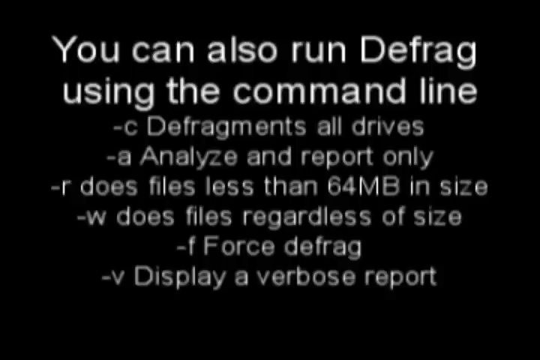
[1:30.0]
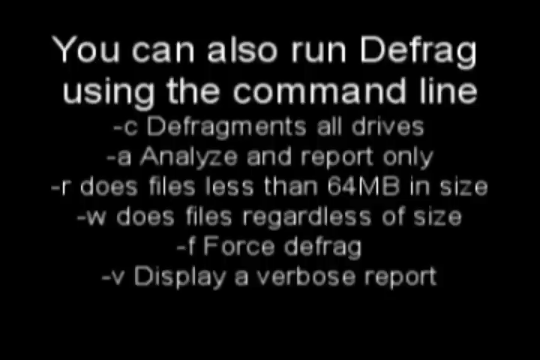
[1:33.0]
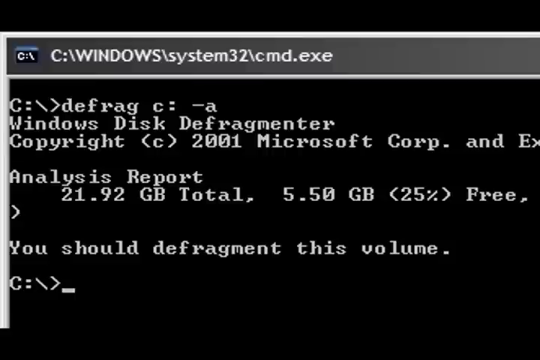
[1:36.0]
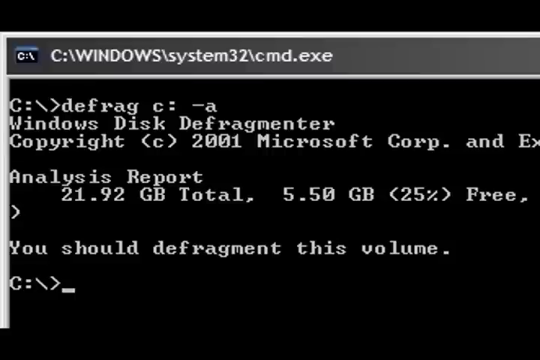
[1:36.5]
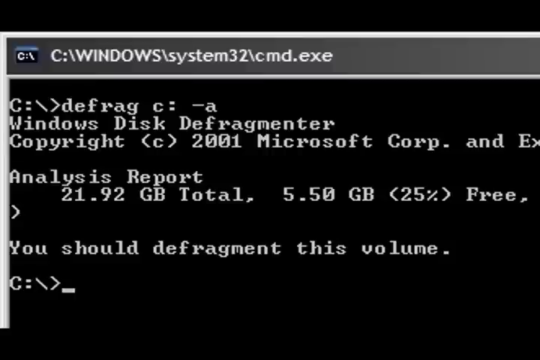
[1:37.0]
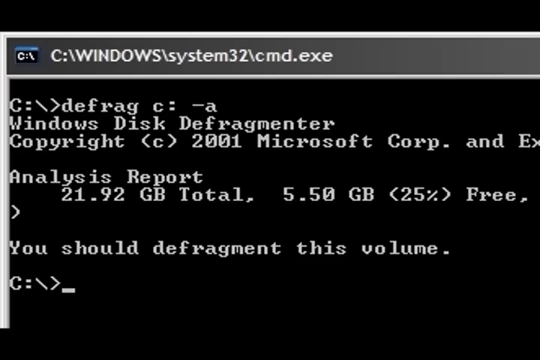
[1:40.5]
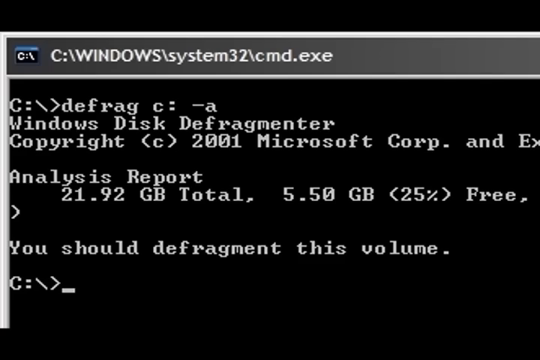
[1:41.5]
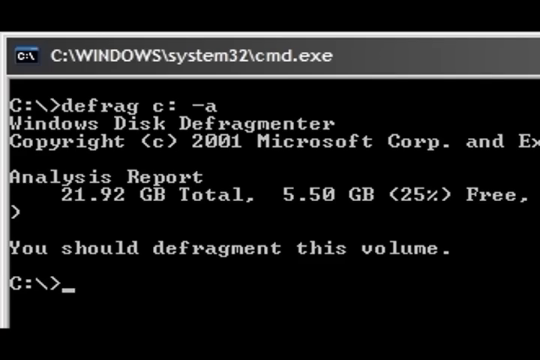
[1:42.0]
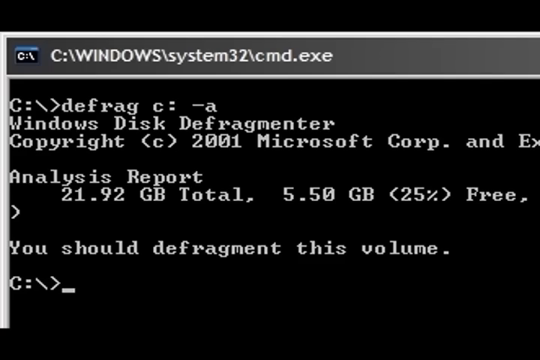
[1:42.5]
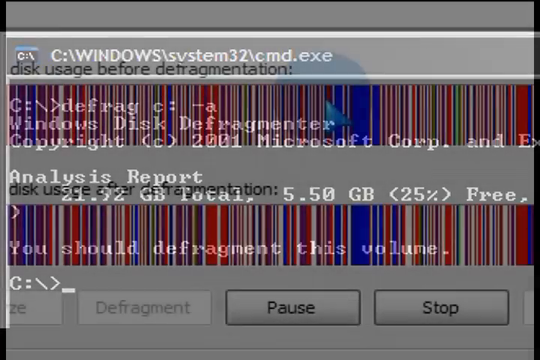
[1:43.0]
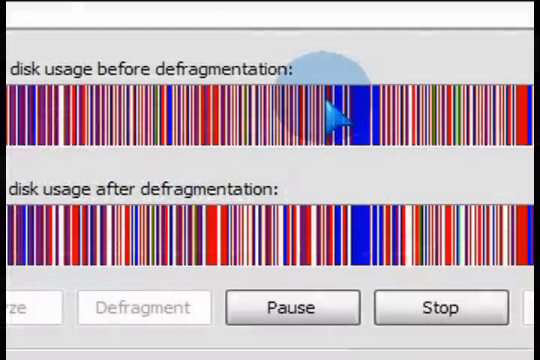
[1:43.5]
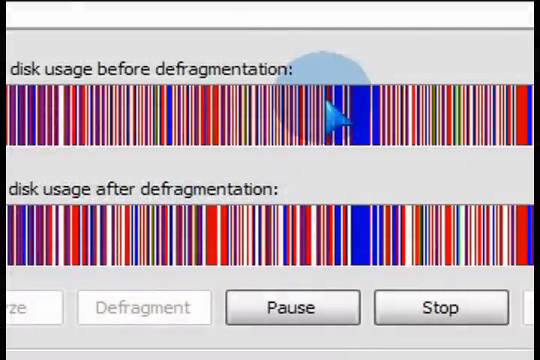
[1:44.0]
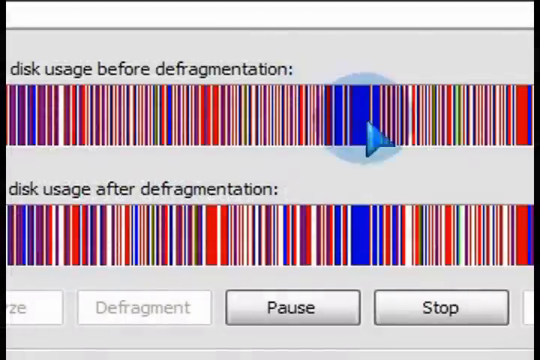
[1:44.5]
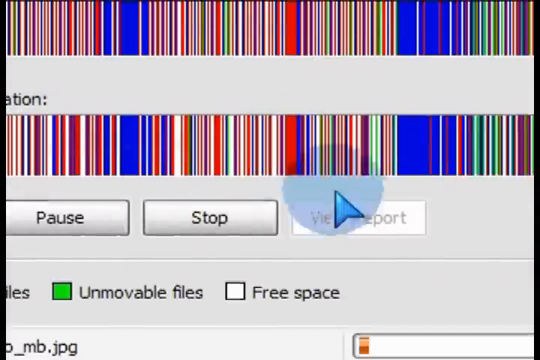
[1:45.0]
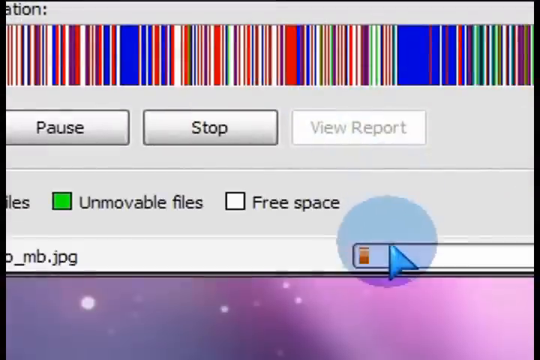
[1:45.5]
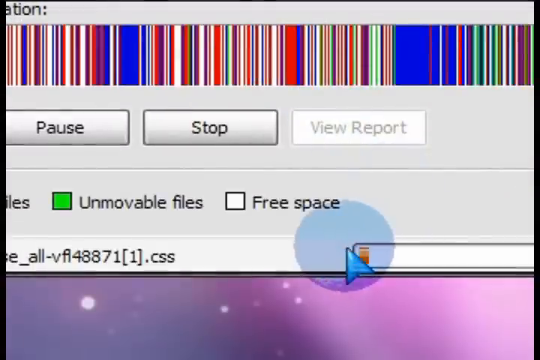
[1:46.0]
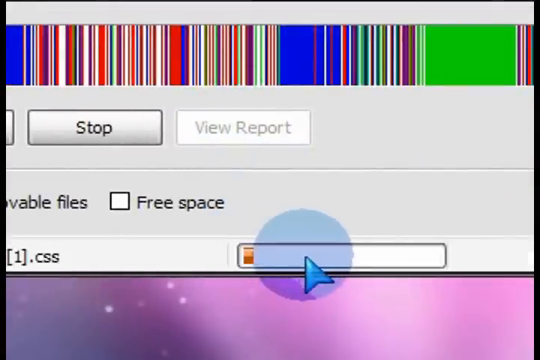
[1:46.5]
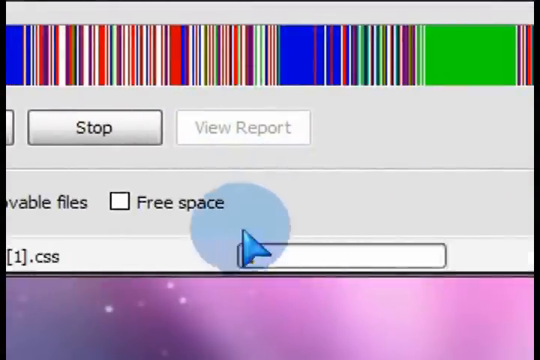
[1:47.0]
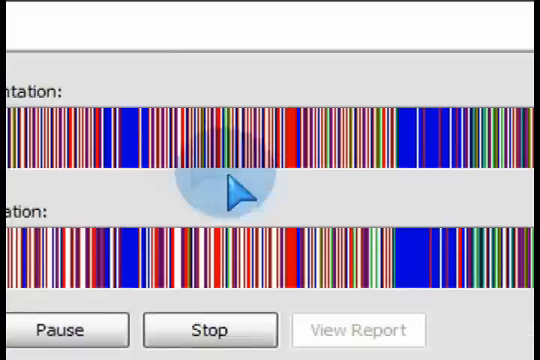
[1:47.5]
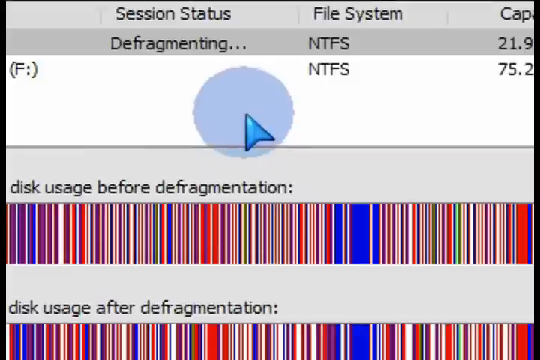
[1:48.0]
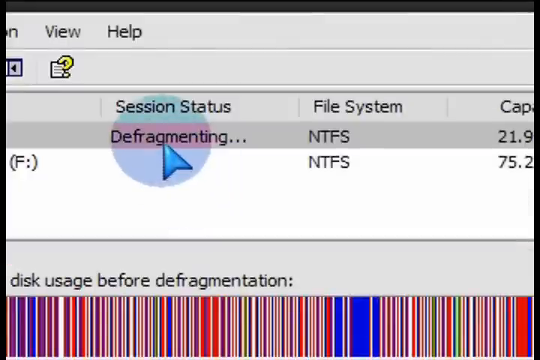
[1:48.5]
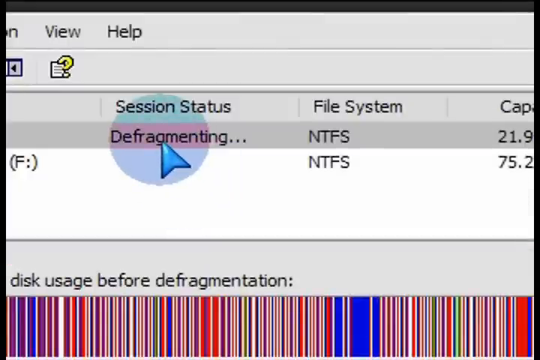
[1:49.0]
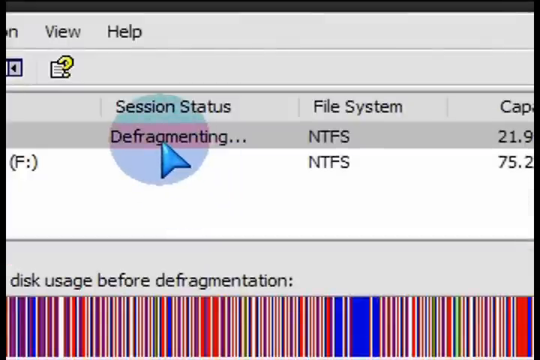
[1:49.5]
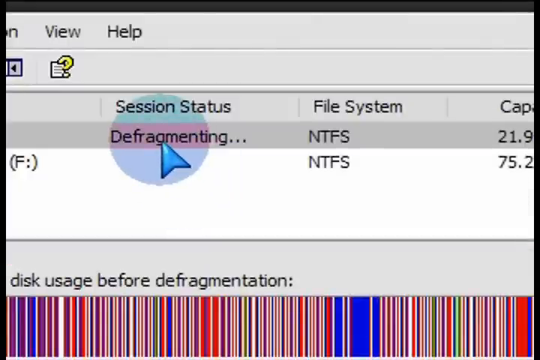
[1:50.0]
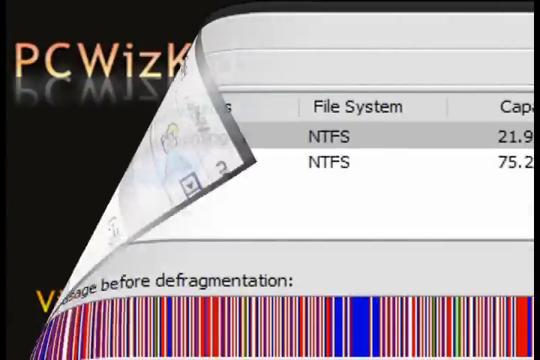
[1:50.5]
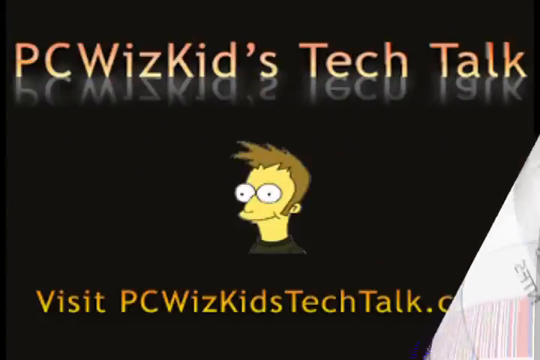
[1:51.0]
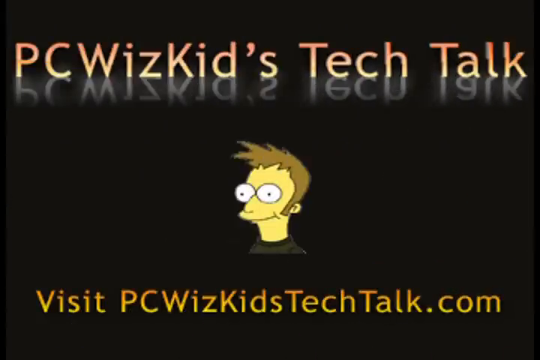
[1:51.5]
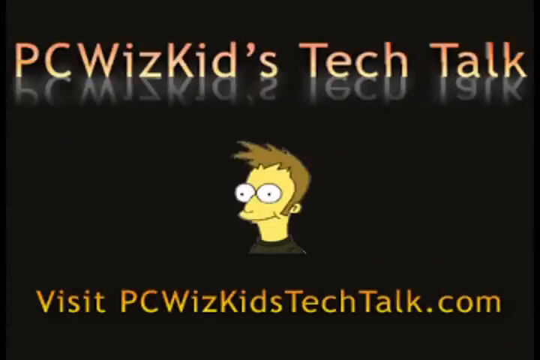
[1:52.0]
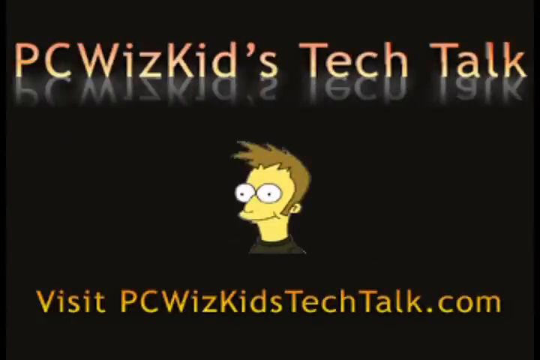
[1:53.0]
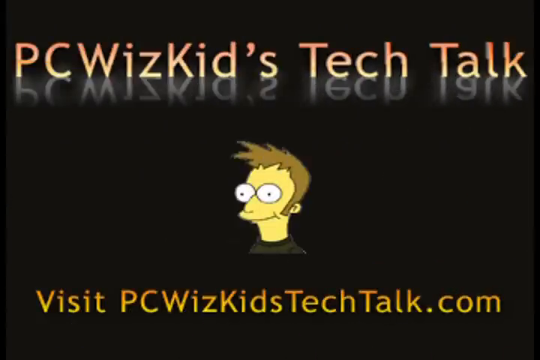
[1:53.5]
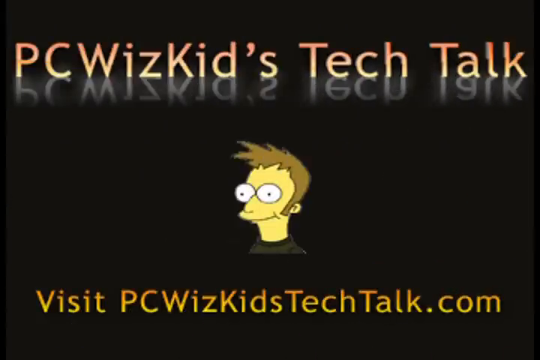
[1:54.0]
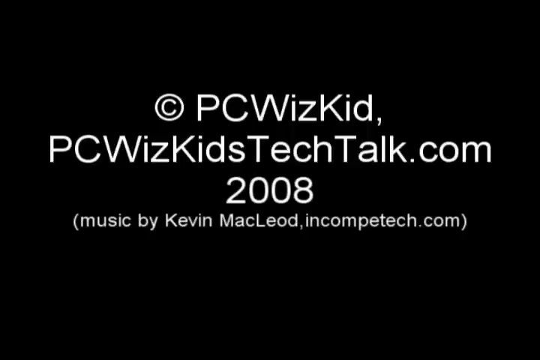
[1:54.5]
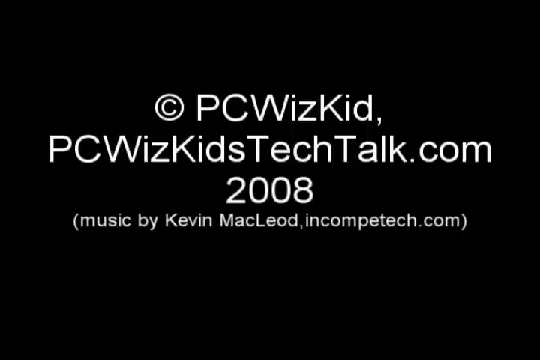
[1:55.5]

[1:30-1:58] A Windows system32 cmd.exe window shows a defrag command for C with A, and text reading Windows Disk Defragmenter, Copyright 2001 Microsoft Corp. An analysis report shows 21.92 GB, total 5.50 GB, "25% free," and "You should defragment this volume." The video returns to the detail of the different colors and their meanings. A loading bar fills, and the session status reads "defragmenting." The pages then peel off to reveal PC WizKids Tech Talk with "visit pcwizkidstechtalk.com," a 2008 copyright for pcwizkidstechtalk.com, and a credit for music by Kevin McLeod, Incompetech.com.